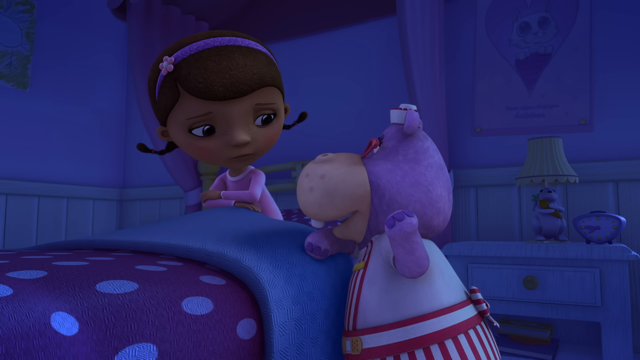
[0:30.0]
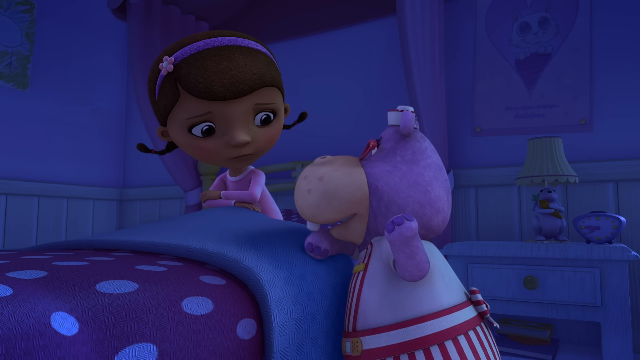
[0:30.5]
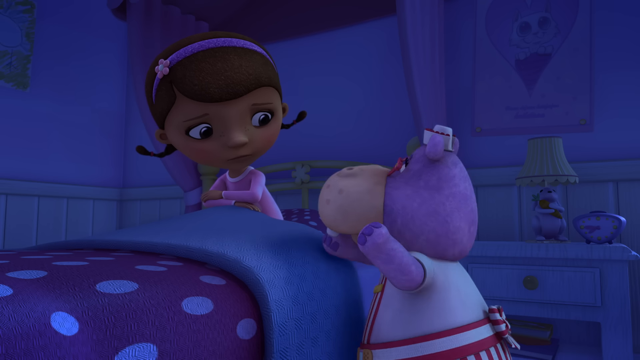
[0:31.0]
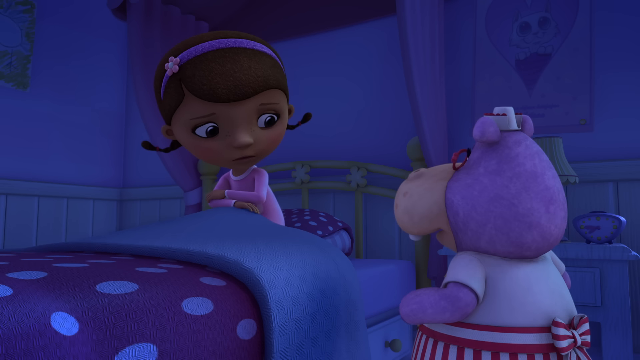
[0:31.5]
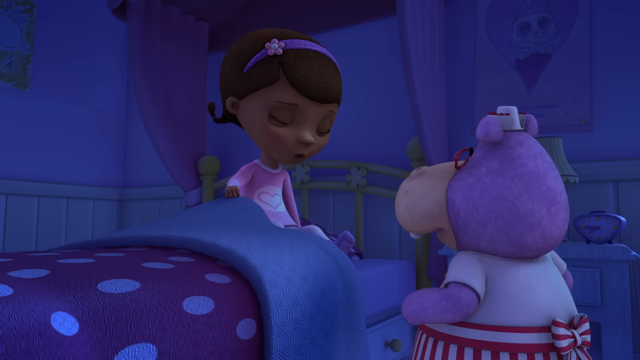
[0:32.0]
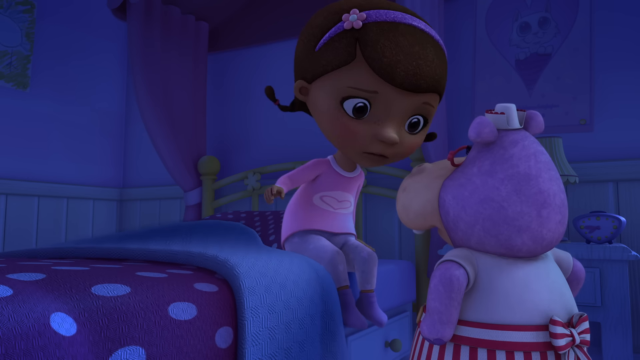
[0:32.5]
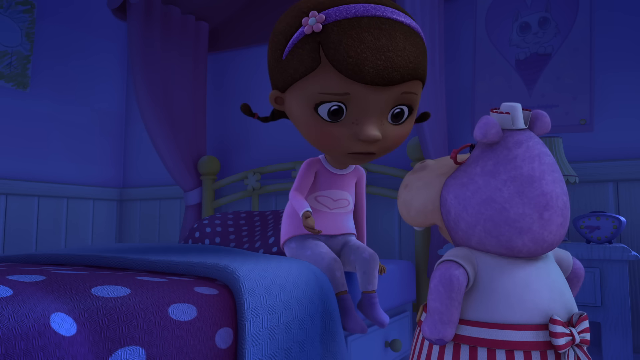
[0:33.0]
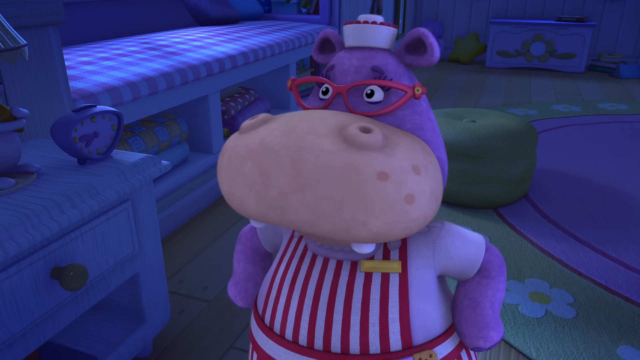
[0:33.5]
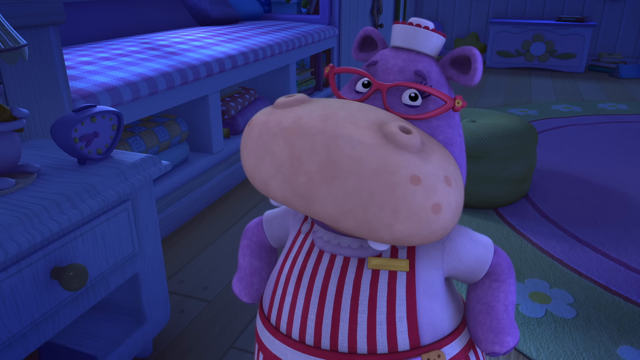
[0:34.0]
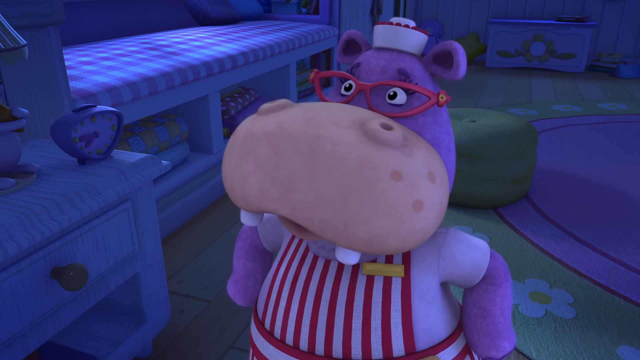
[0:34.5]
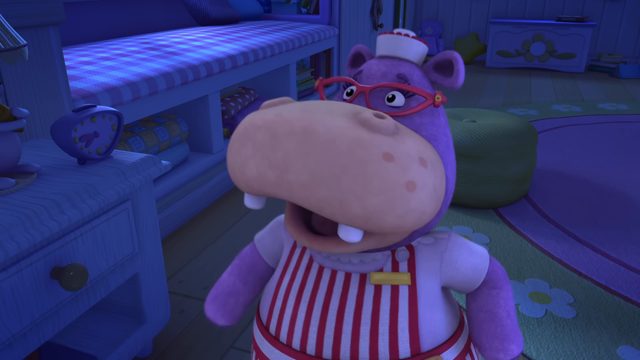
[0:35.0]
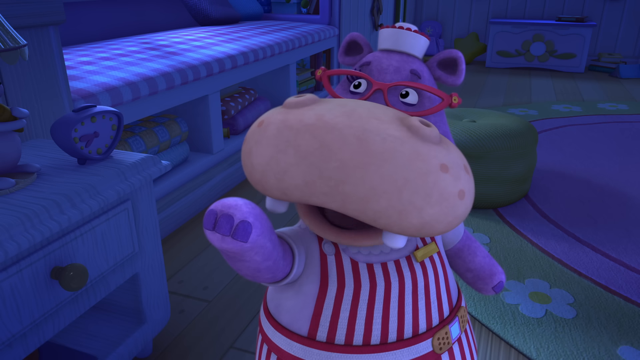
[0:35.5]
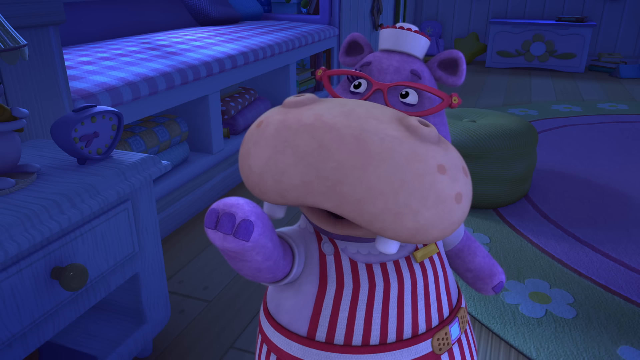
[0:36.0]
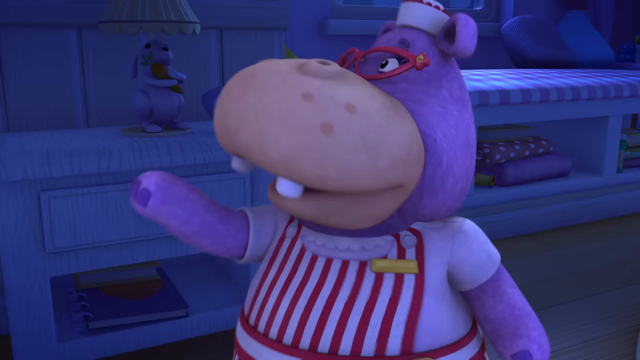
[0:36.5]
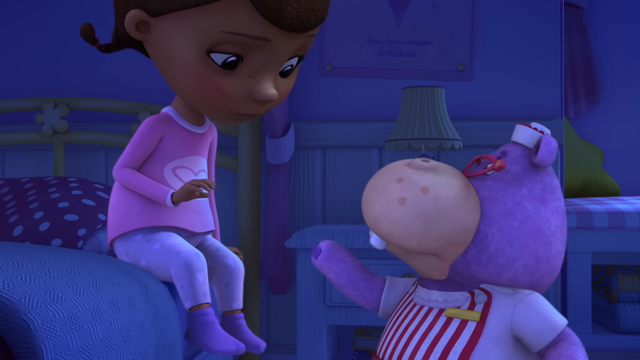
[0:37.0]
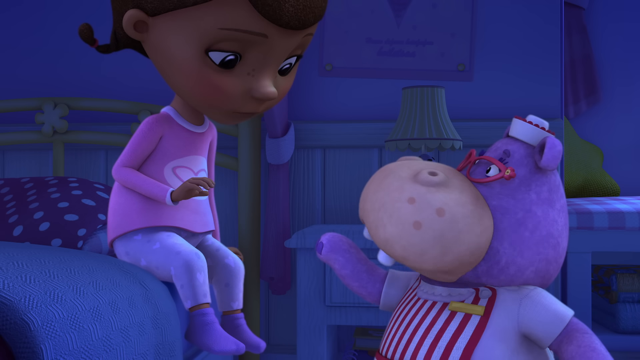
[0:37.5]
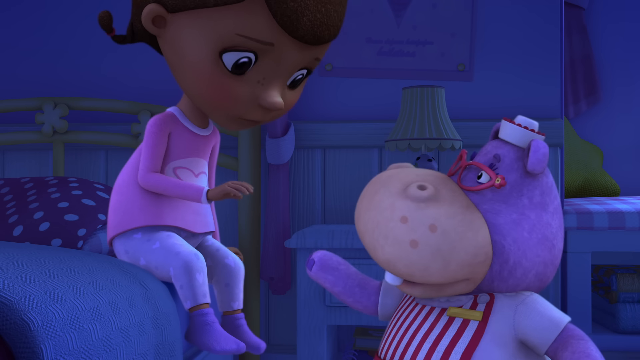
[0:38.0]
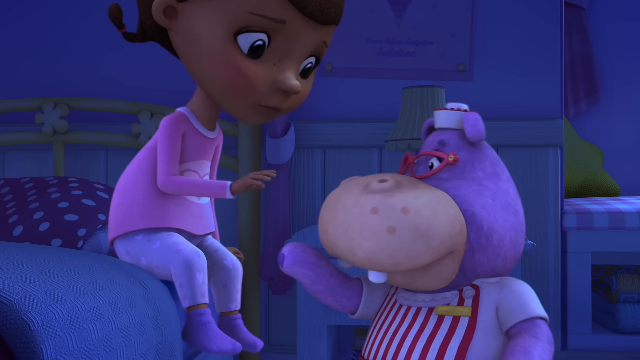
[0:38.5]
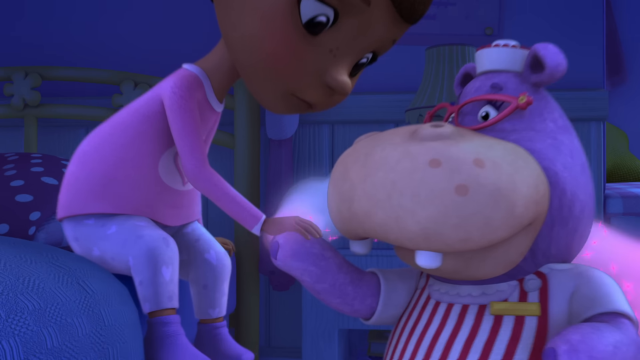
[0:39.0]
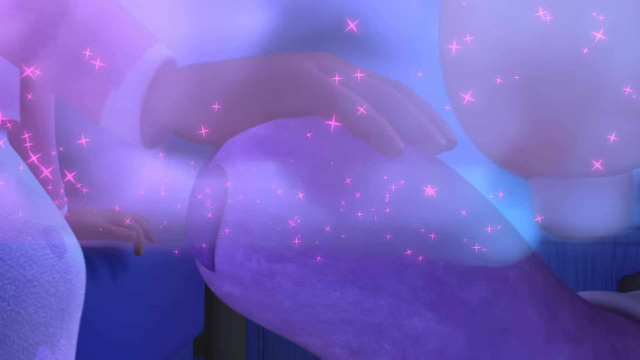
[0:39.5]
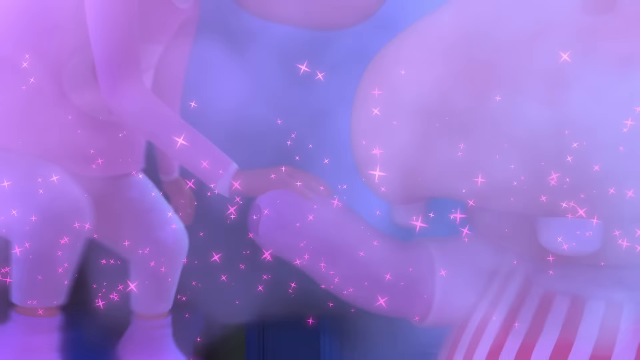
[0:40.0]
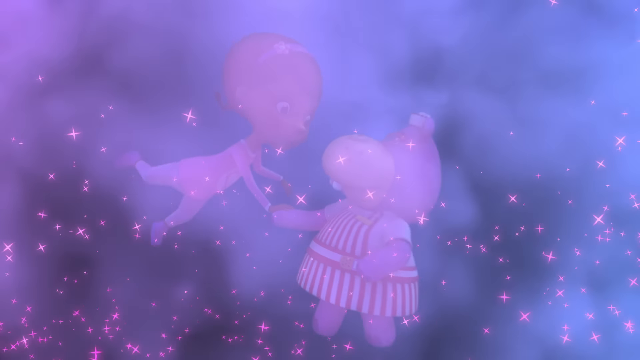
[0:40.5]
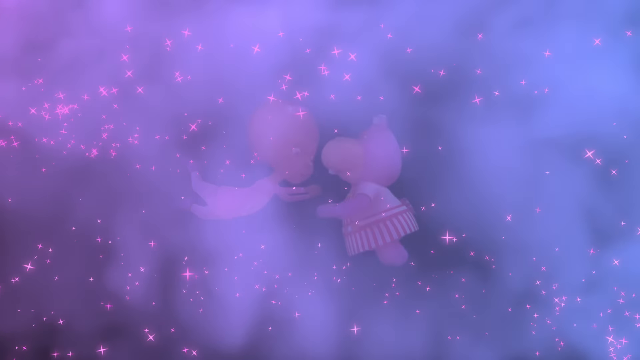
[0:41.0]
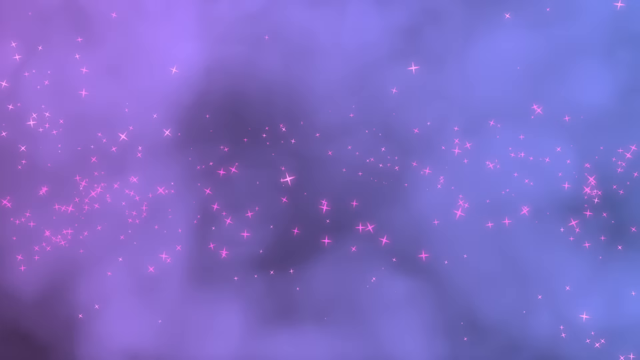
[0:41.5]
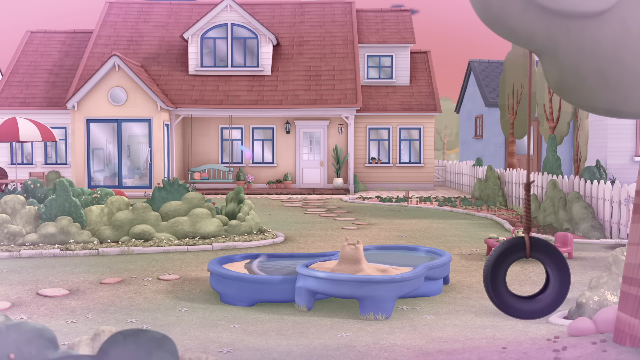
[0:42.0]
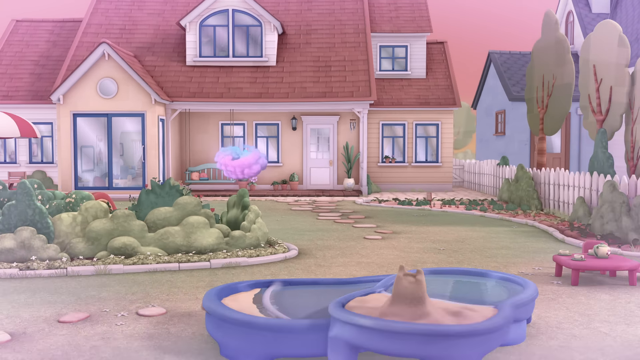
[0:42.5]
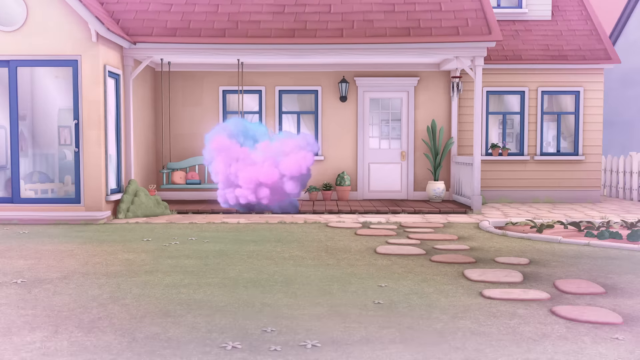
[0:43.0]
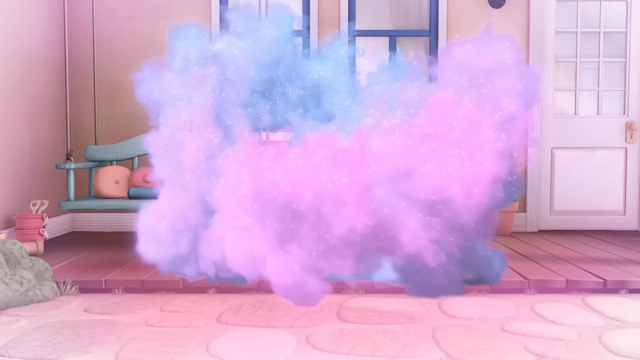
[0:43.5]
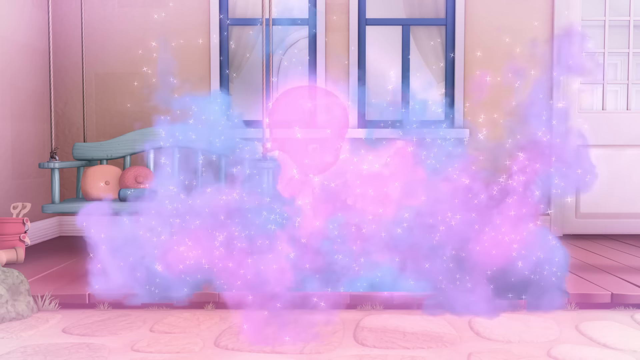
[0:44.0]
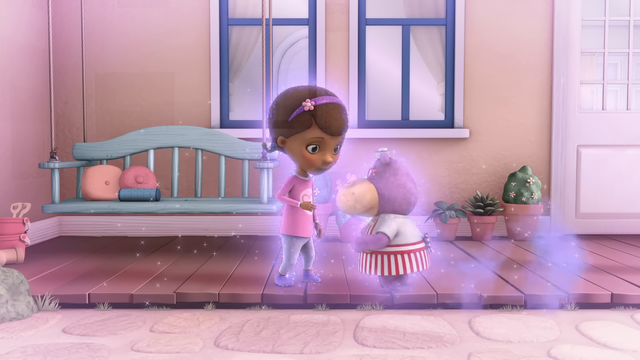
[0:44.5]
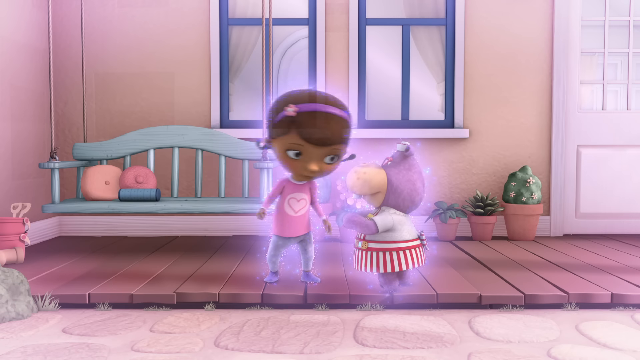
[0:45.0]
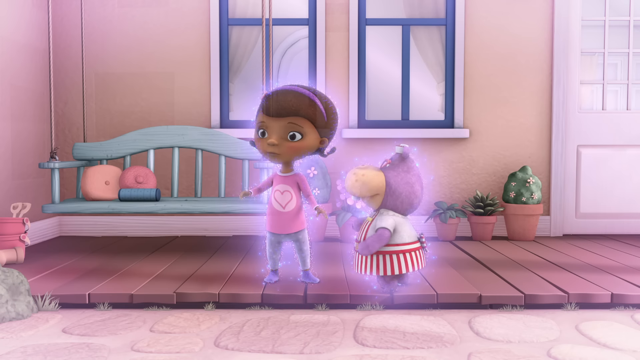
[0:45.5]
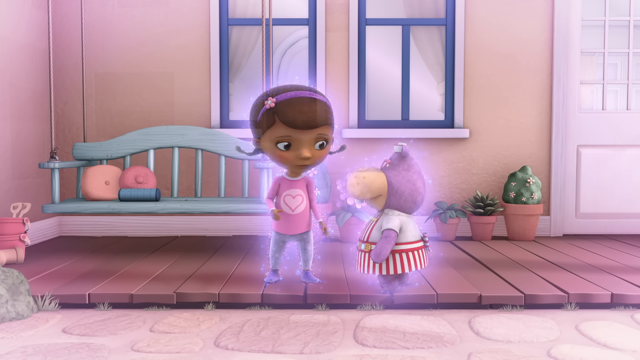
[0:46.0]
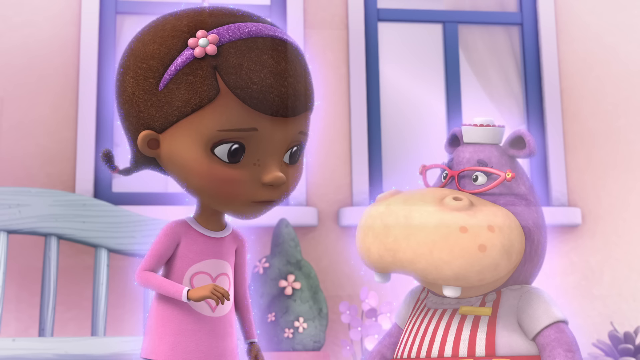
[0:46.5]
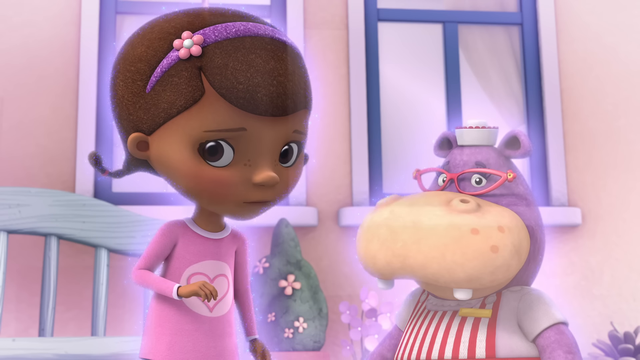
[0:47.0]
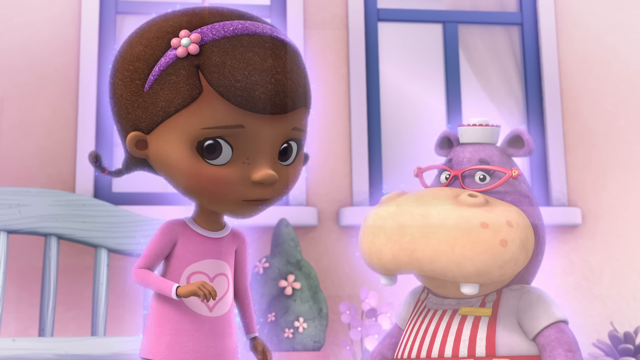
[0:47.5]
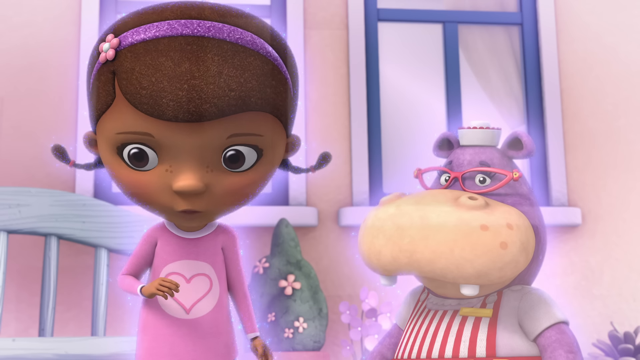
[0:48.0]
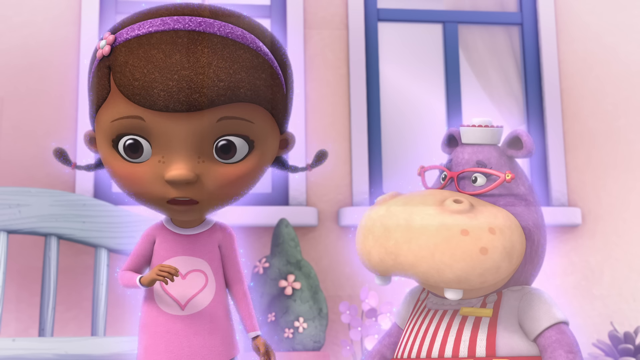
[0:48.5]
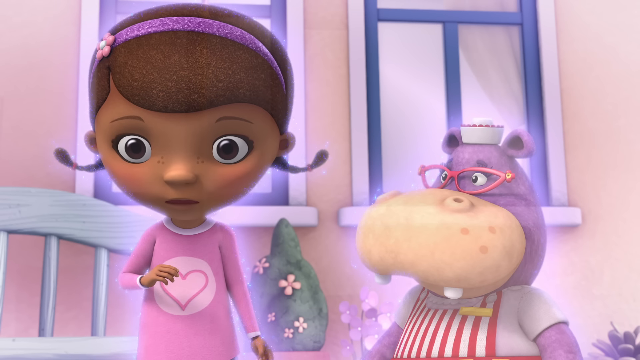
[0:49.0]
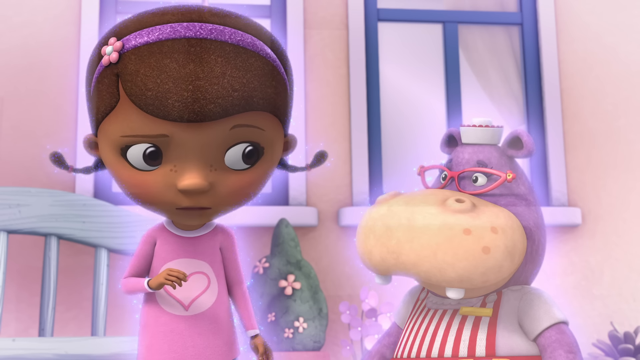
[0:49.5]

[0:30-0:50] The girl with brown hair and a purple-blue hair ribbon, who has just woken up, is talking to the hippo in what appears to be a dream sequence. The hippo wears red and white clothing and red glasses and has a purple face. There is a yellow, green and white lampshade on a little lamp at the back. The room has a blue-purple hue. The bedsheets are purple with white dots. The walls are green on the lower part and blue on the top part. The girl gets out of bed while they keep talking, and a little bit of green shows in the room. They touch each other's hands and smoke appears. She then appears outside. The house is tan with blue-trimmed window frames, and a green porch swing appears. There is a view of the porch with some different colors. A grayish house is to the right.